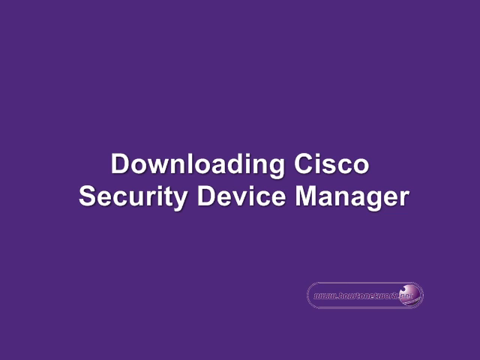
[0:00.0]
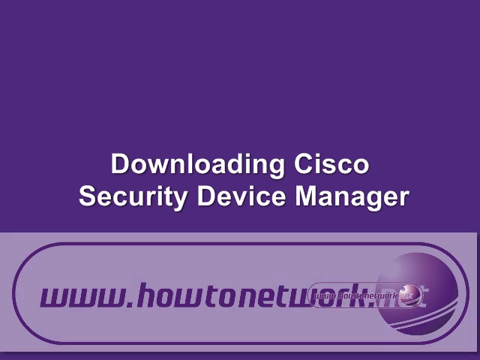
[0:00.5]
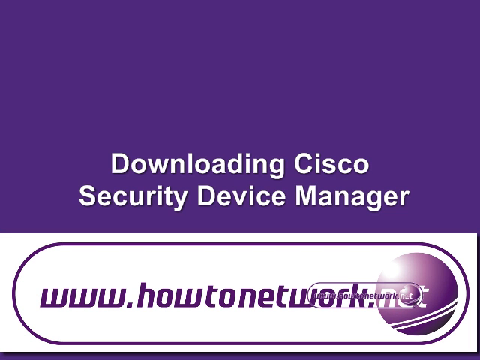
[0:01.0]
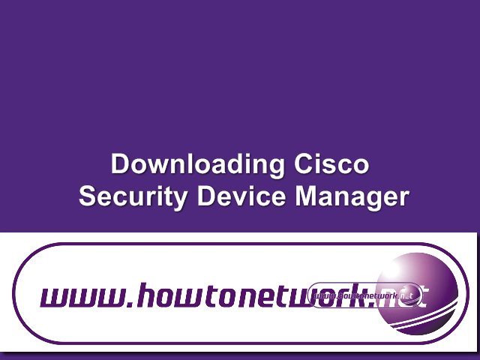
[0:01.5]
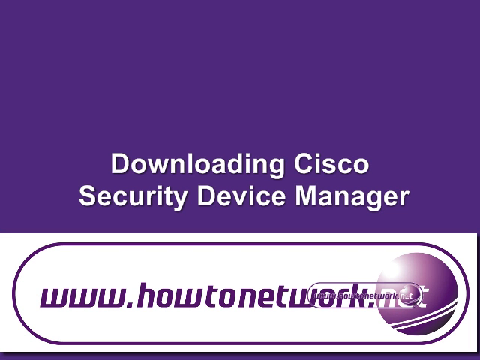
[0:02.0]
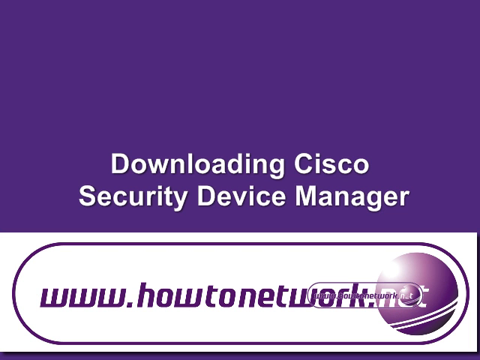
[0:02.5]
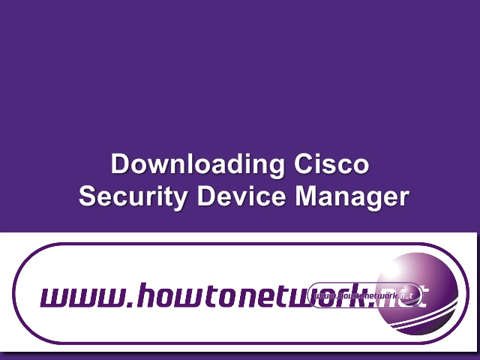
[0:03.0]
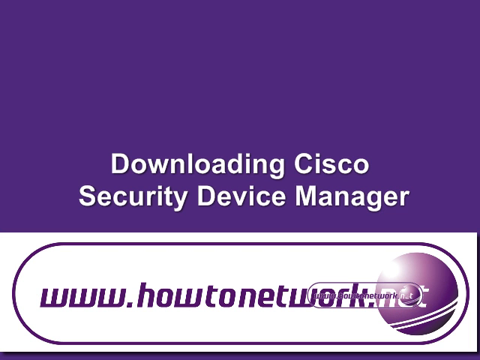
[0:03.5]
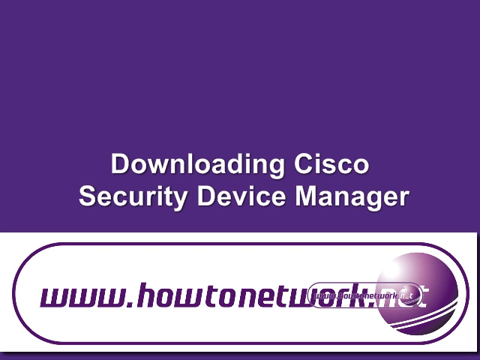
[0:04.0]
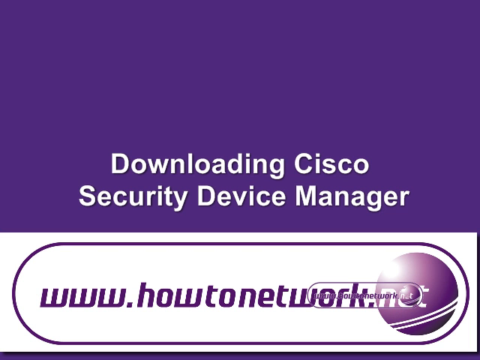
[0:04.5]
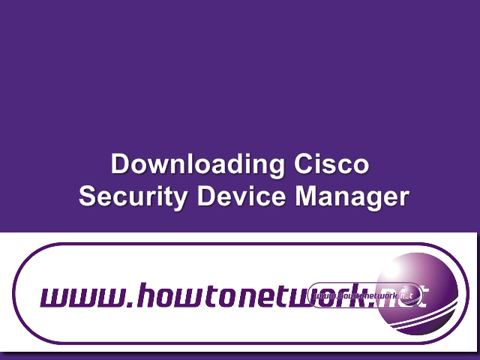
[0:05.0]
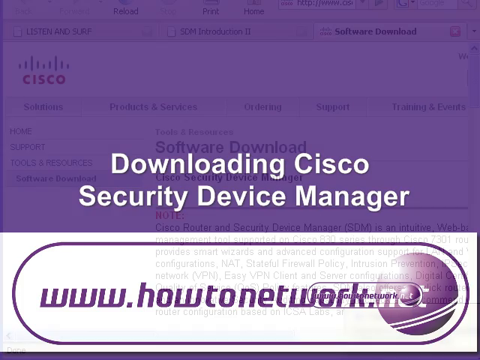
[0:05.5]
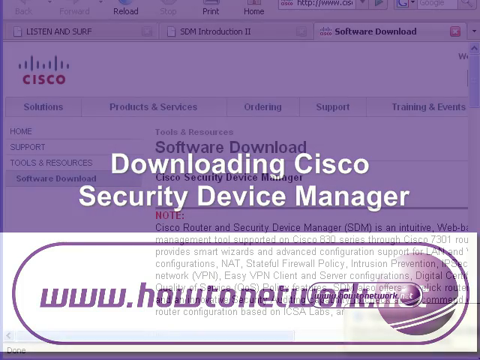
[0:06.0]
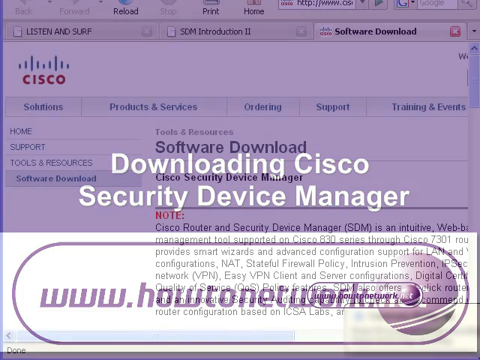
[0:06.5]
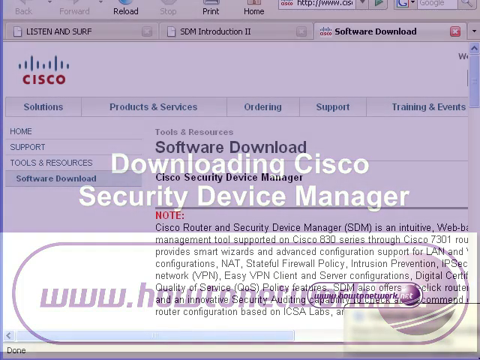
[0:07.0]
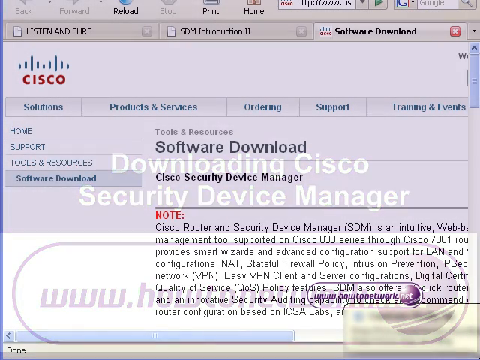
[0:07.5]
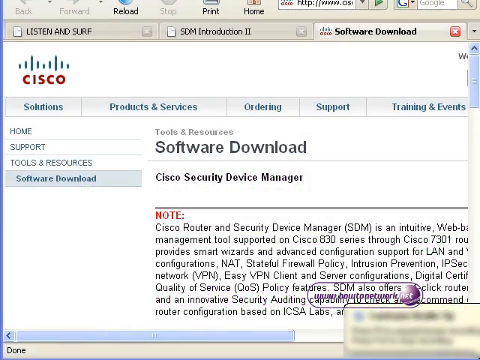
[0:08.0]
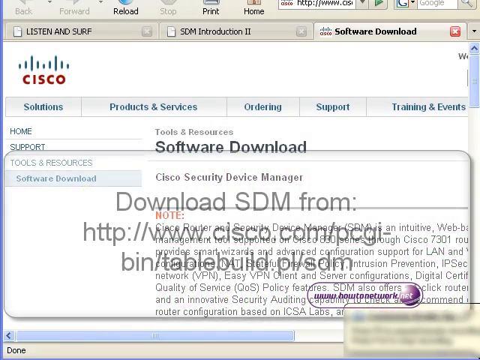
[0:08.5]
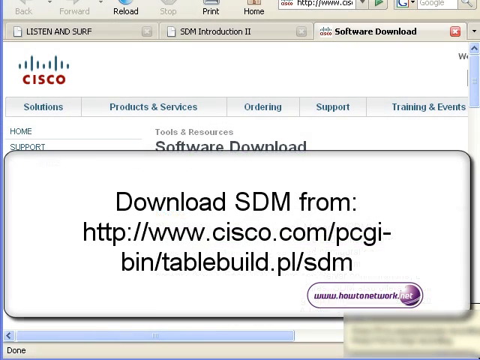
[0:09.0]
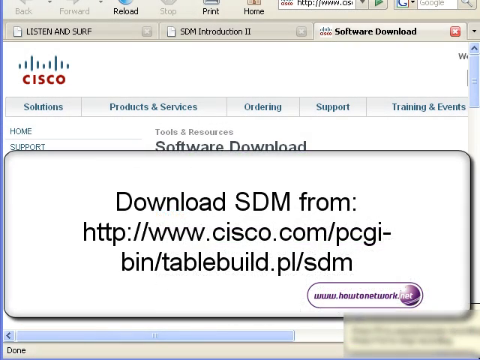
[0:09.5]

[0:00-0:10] A purple background with white lettering shows a website link, "www.howtonetwork.net", and the text "downloading Cisco Security Device Manager", introducing a tutorial on how to do that. The video then moves to the Cisco website, where the software can be downloaded. The page has a bunch of different buttons, such as solutions, products and services, ordering, support, training and events. The site looks a bit dated, probably from a few years ago.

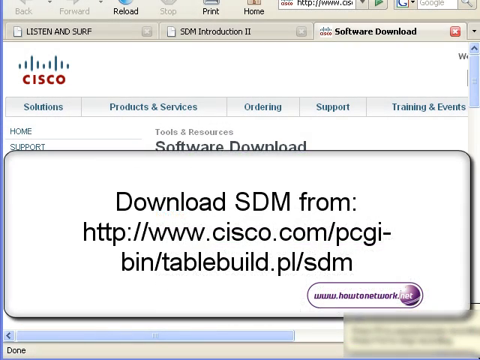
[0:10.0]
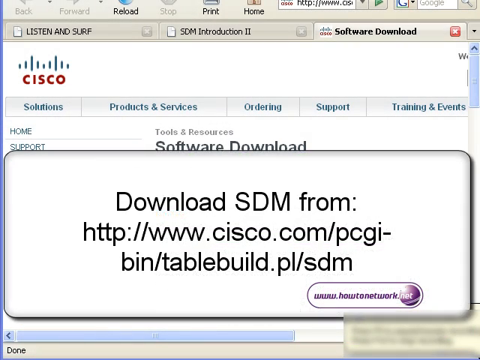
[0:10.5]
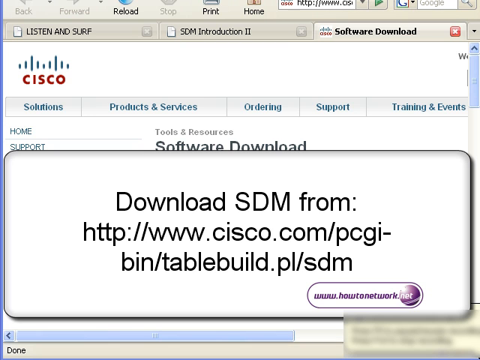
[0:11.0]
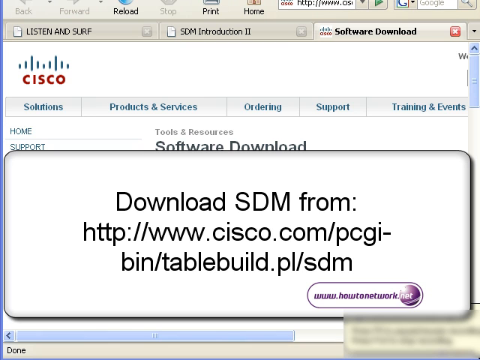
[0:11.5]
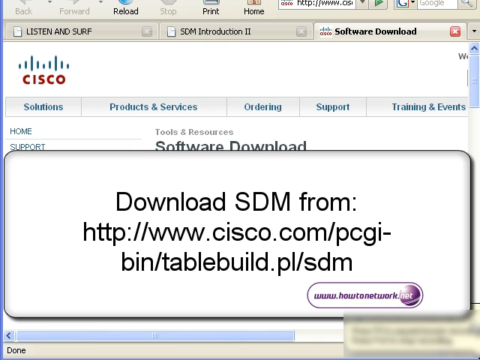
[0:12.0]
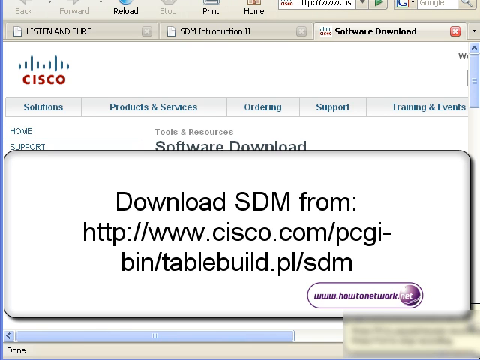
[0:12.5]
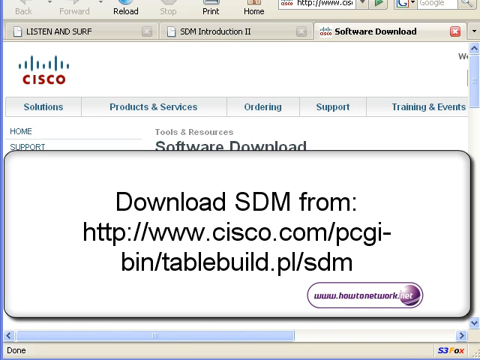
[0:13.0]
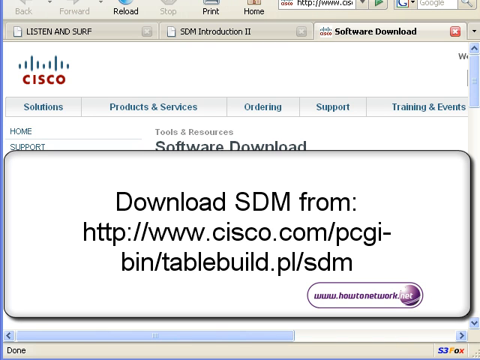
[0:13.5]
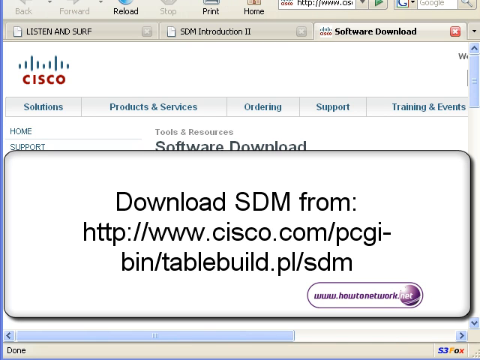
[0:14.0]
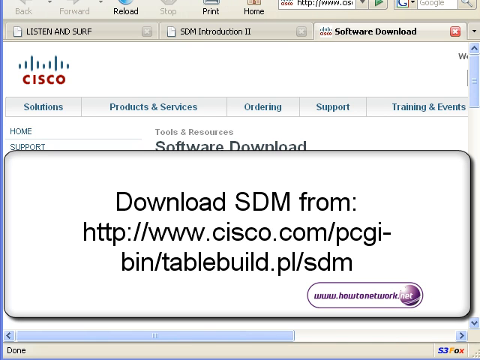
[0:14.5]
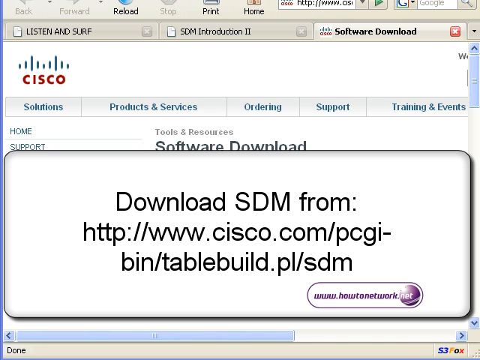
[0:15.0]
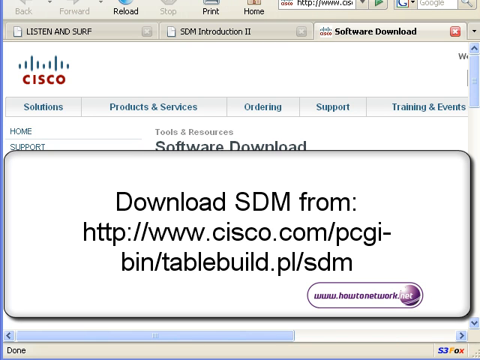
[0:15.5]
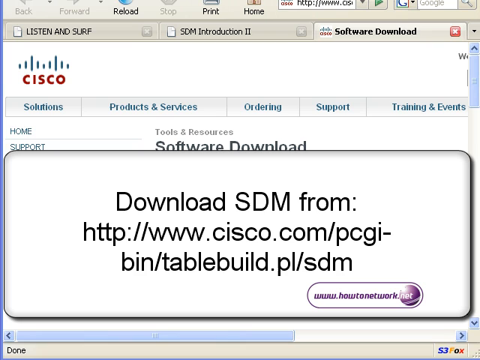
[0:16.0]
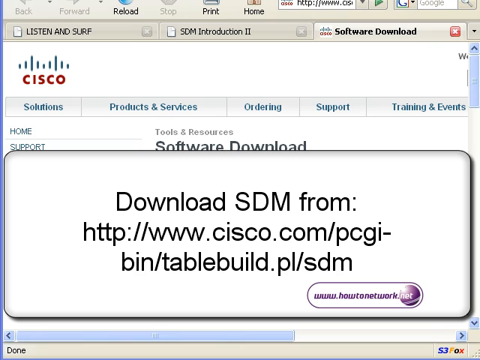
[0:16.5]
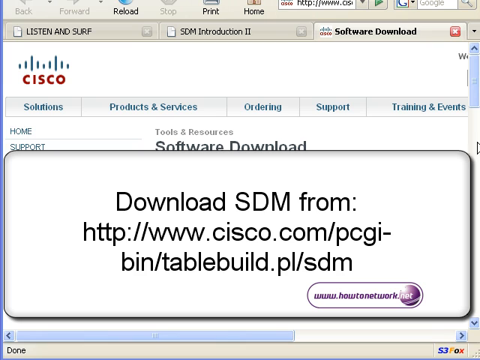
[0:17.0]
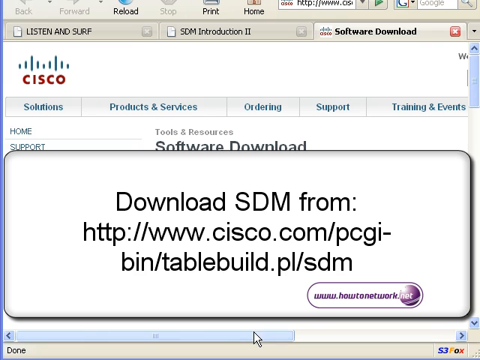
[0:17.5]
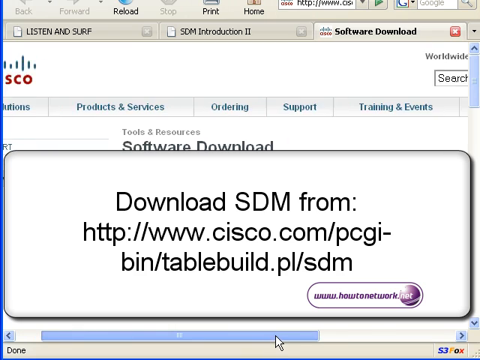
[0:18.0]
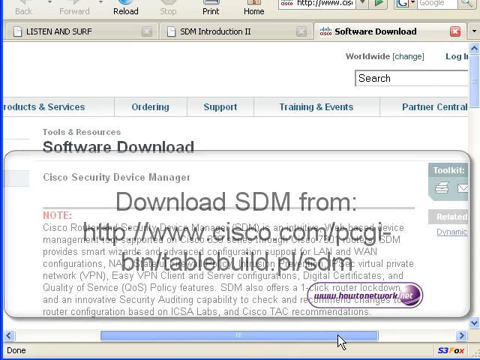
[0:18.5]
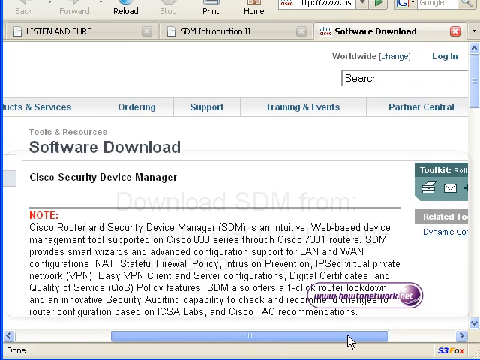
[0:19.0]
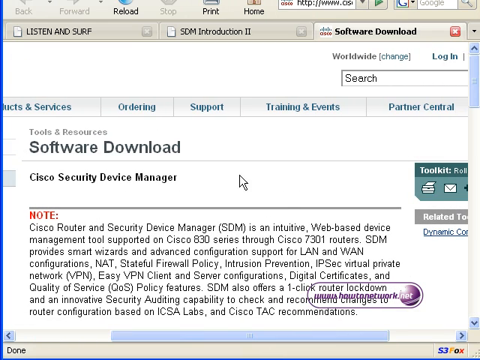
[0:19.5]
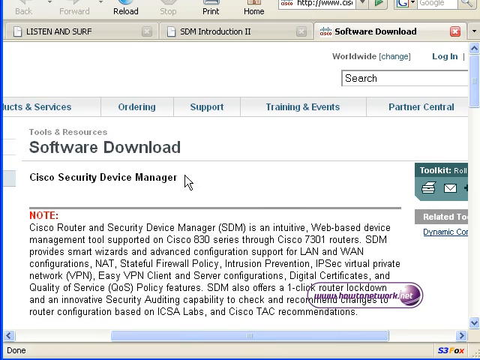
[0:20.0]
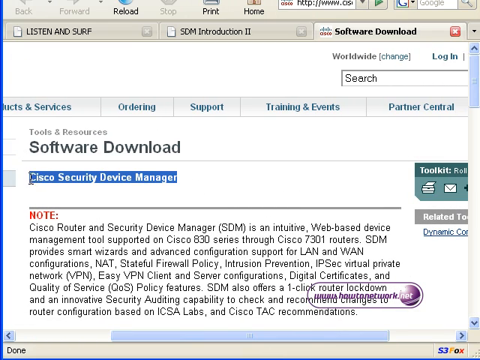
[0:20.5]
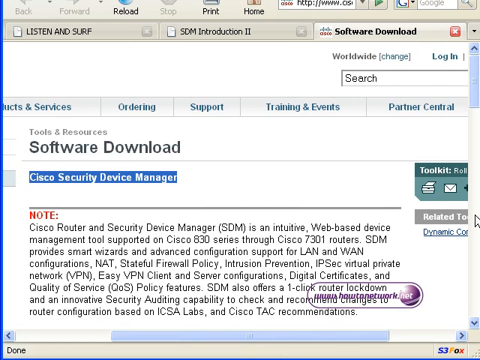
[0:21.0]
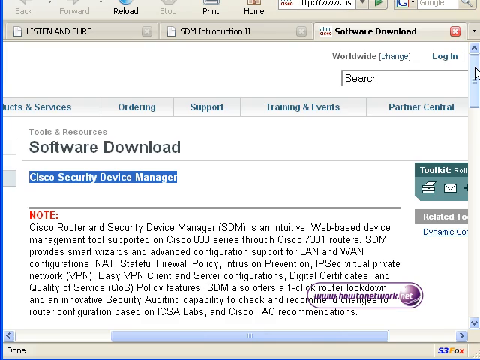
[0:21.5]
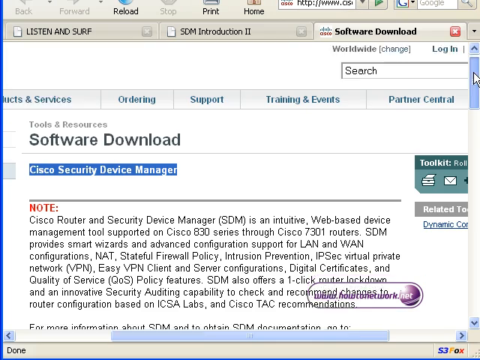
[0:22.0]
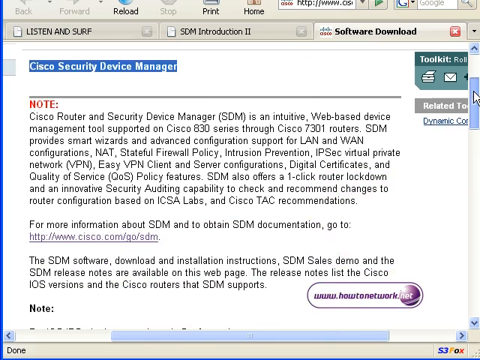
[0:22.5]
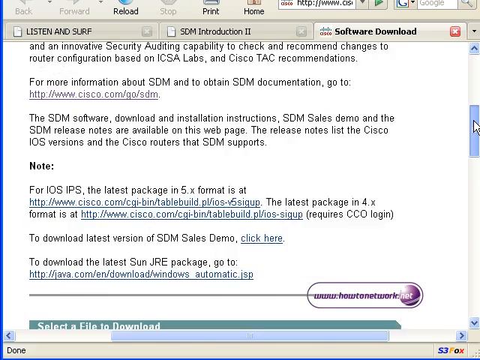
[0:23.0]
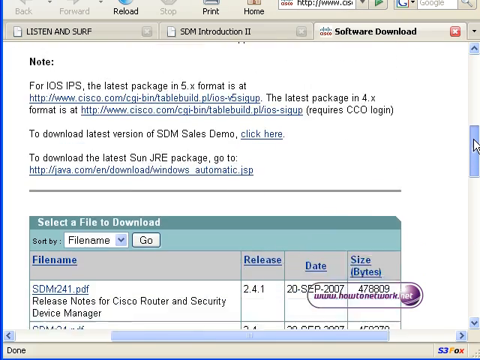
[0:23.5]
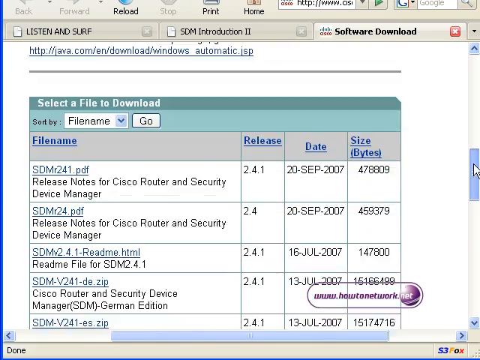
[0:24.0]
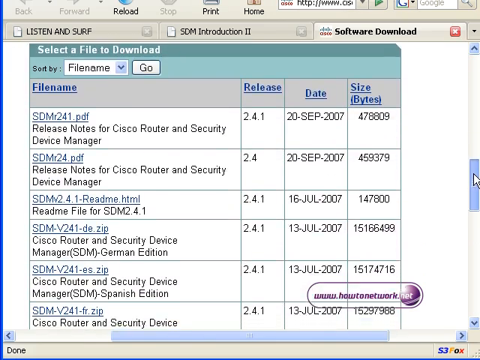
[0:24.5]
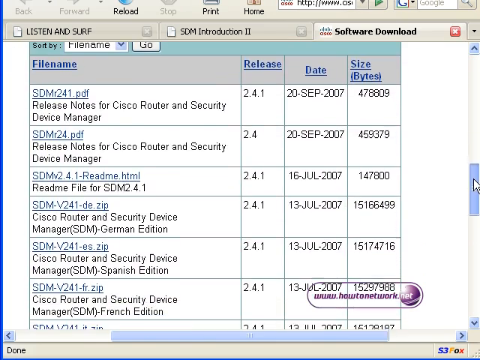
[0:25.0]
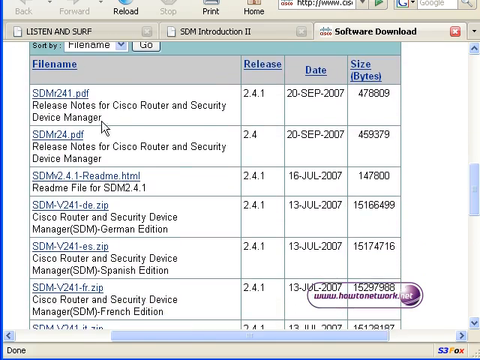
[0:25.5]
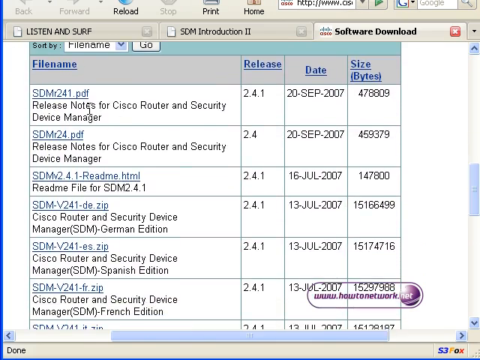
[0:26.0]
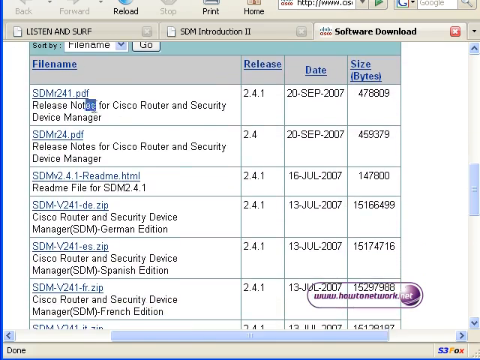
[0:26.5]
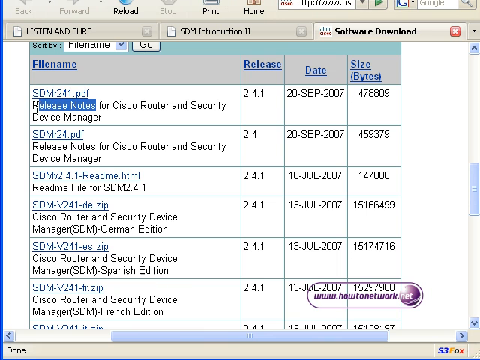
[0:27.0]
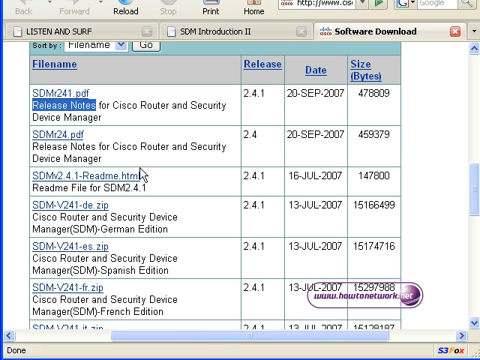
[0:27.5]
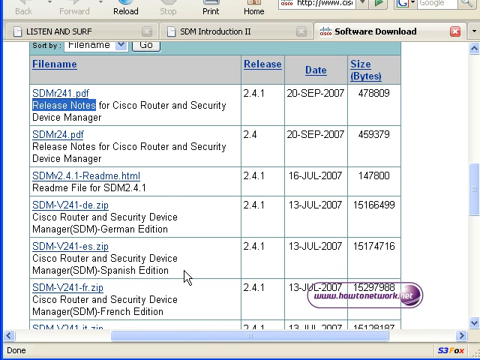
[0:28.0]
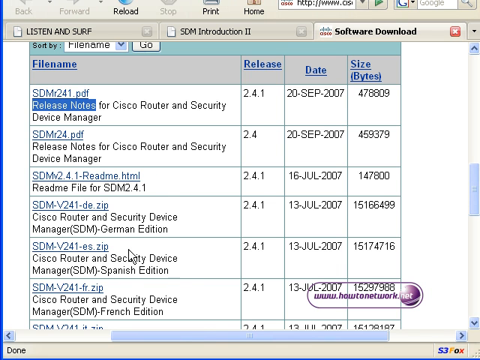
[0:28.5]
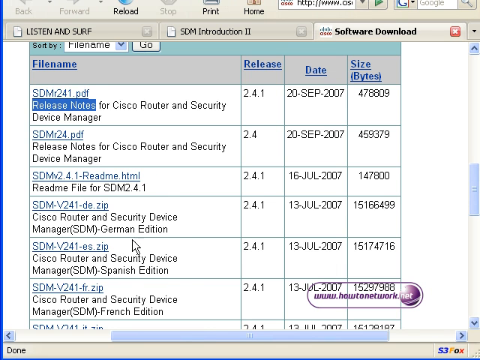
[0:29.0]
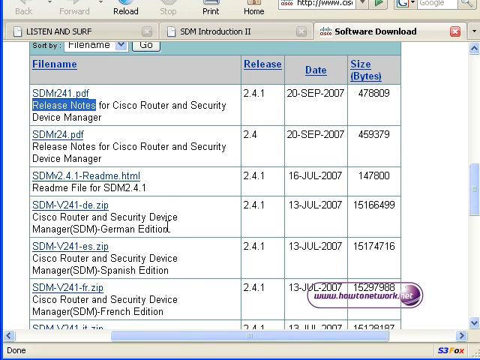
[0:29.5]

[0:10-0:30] A link to download the SDM appears in a white box in black text, beginning "http://www.cisco.com". The view stays on the website page, scrolling around. A mouse appears and highlights in blue a sentence that says "Cisco Security Device Manager". Scrolling down the page reveals a chart of different files with four columns: file name, release, date, and file size in bytes. The mouse highlights various words on the chart. The file names have descriptions underneath; the first is "Release Notes for Cisco Router and Security Device Manager", and the second is also "Release Notes for Cisco Router and Security Device Manager".